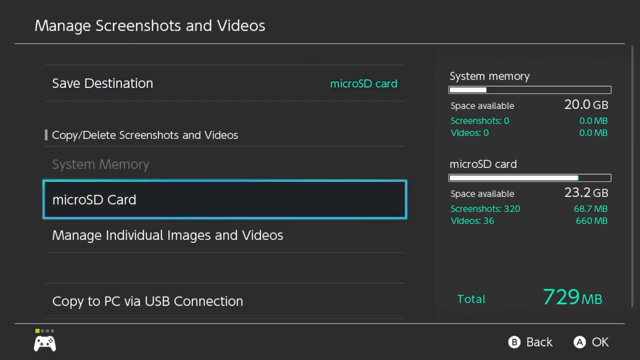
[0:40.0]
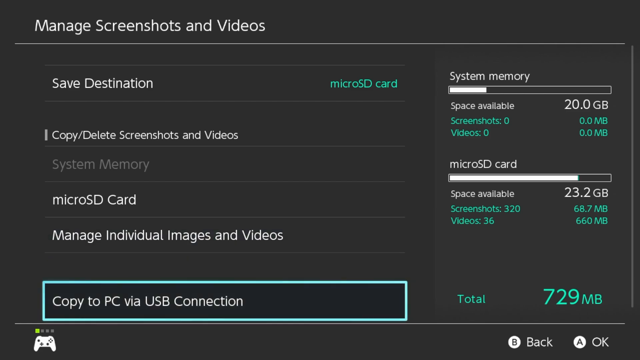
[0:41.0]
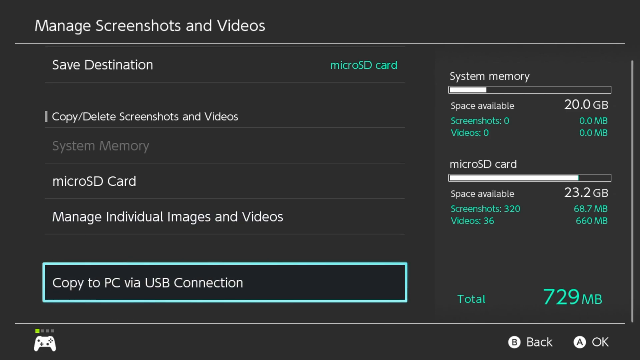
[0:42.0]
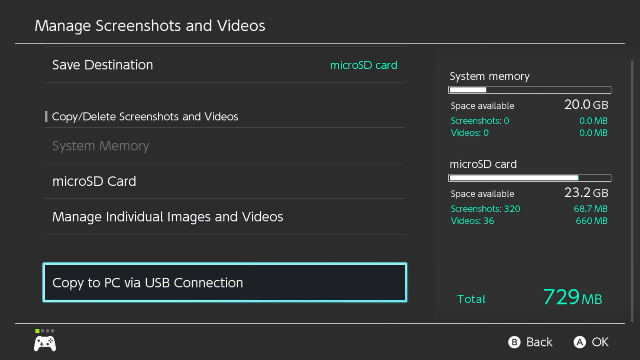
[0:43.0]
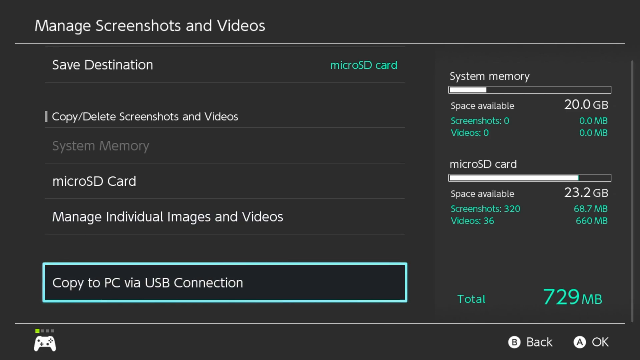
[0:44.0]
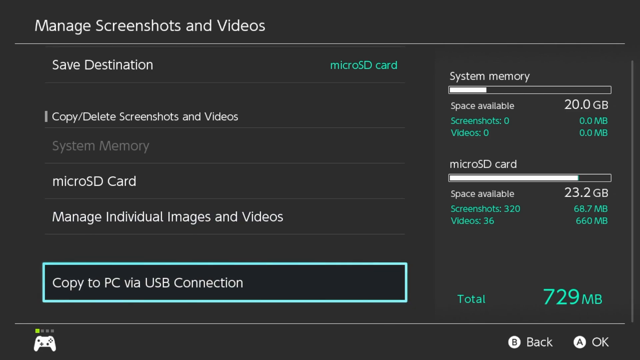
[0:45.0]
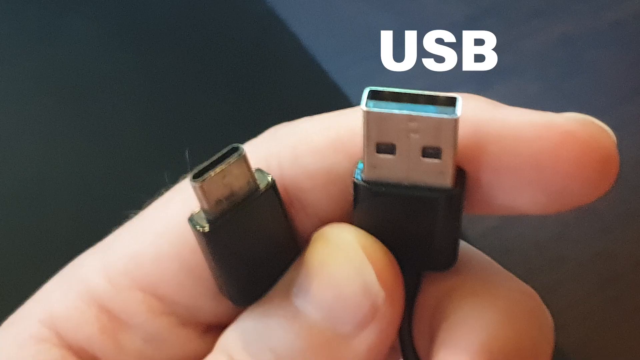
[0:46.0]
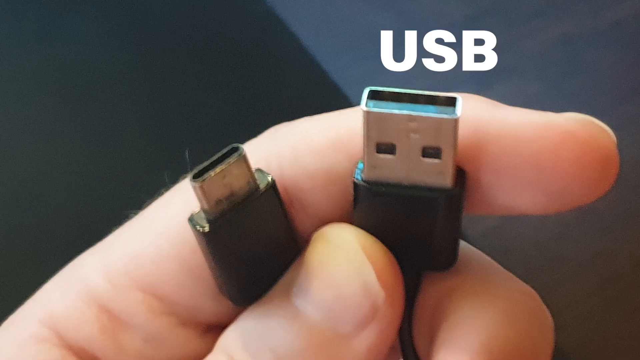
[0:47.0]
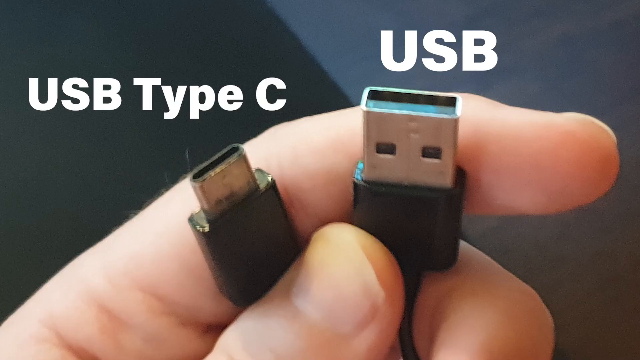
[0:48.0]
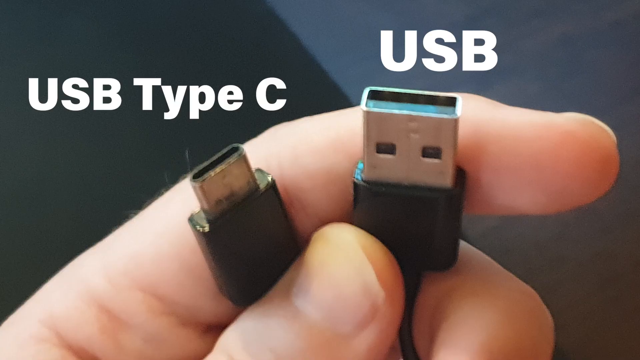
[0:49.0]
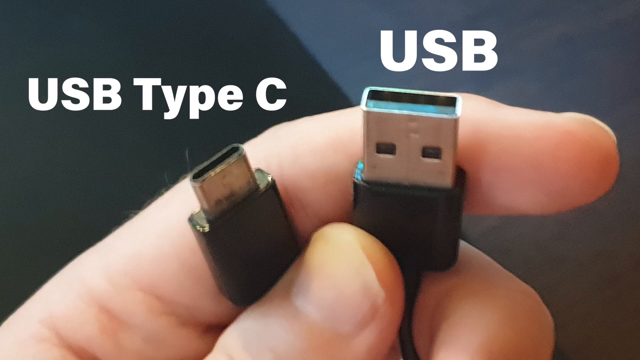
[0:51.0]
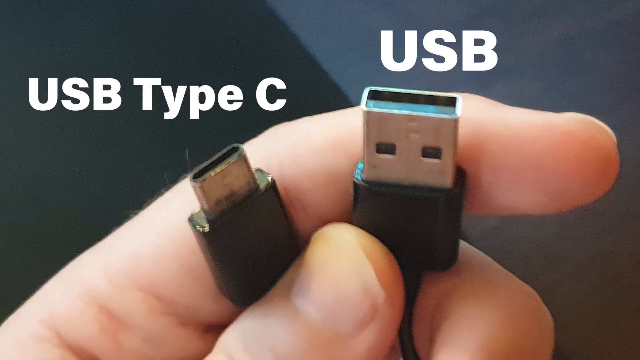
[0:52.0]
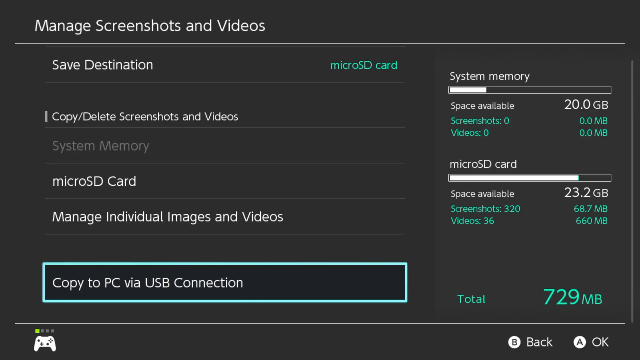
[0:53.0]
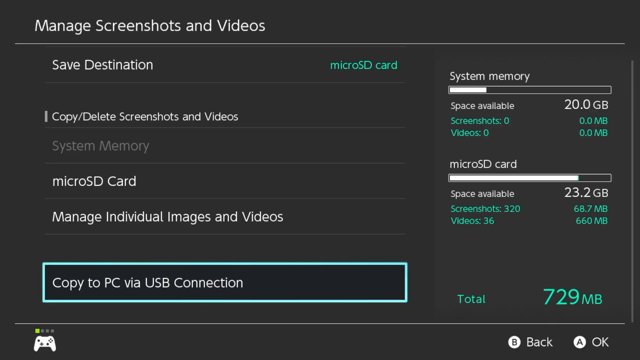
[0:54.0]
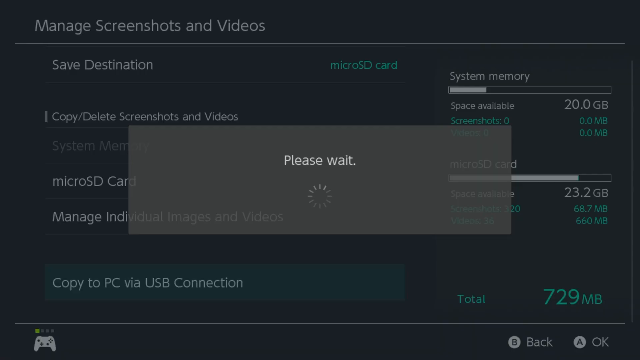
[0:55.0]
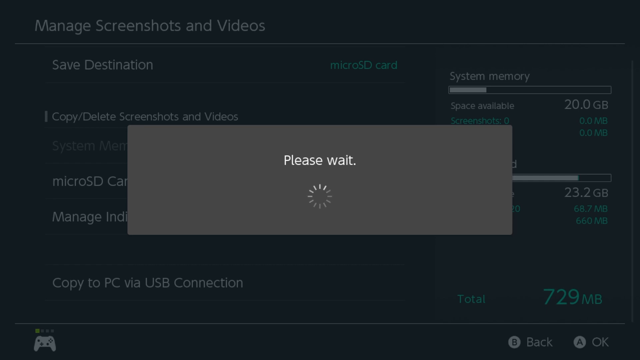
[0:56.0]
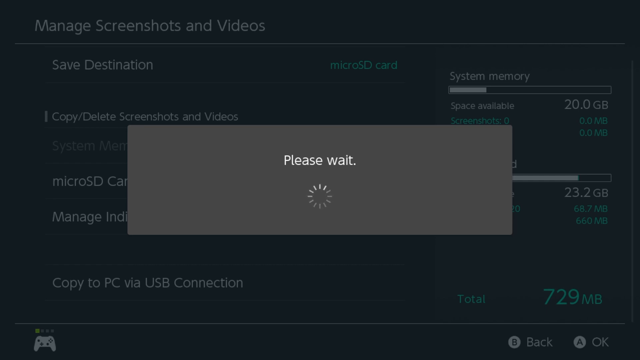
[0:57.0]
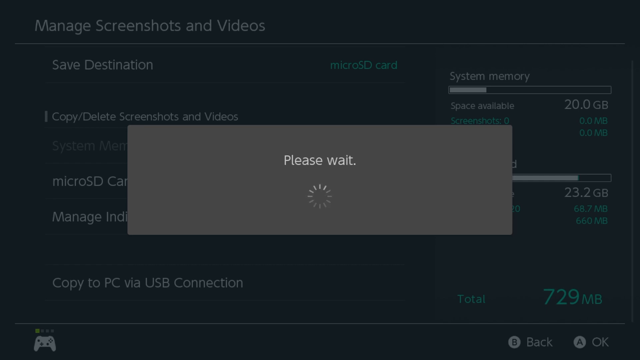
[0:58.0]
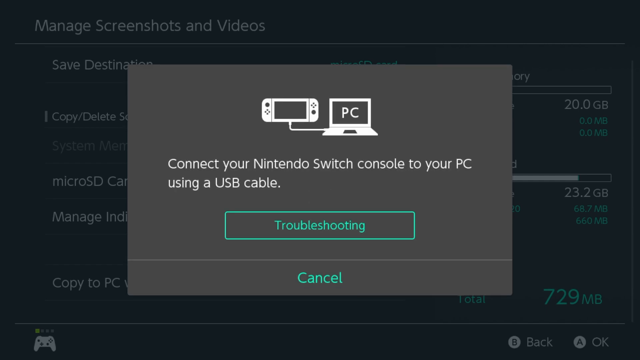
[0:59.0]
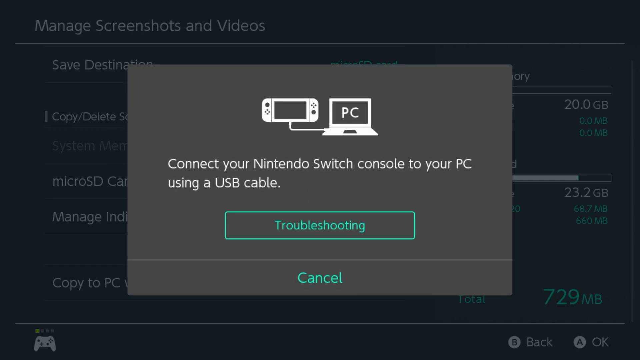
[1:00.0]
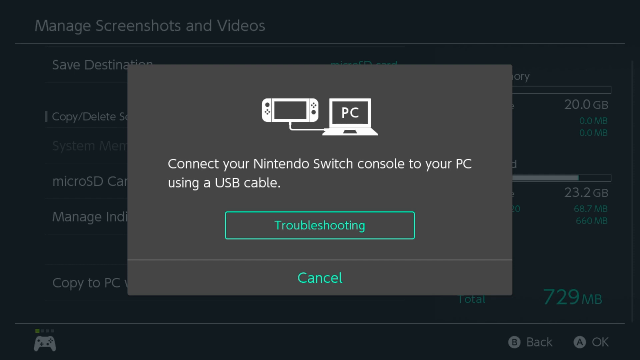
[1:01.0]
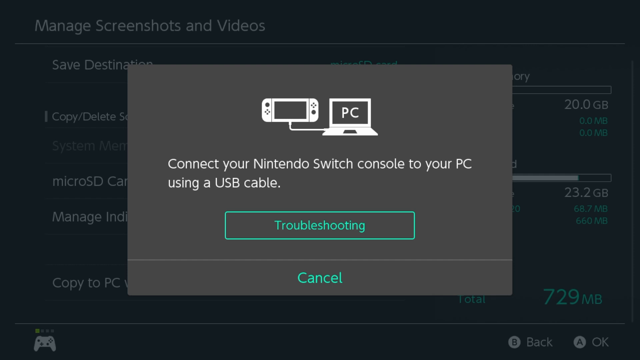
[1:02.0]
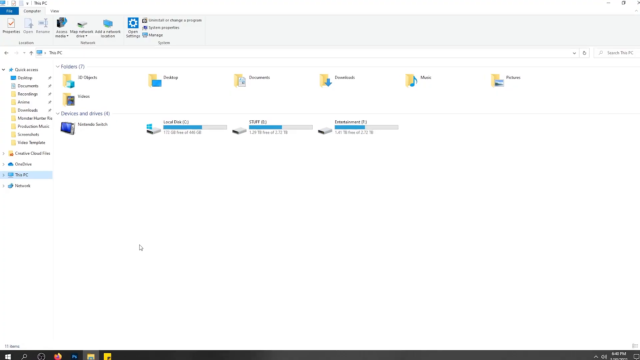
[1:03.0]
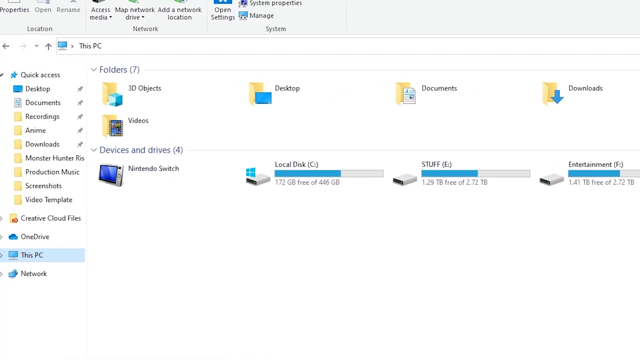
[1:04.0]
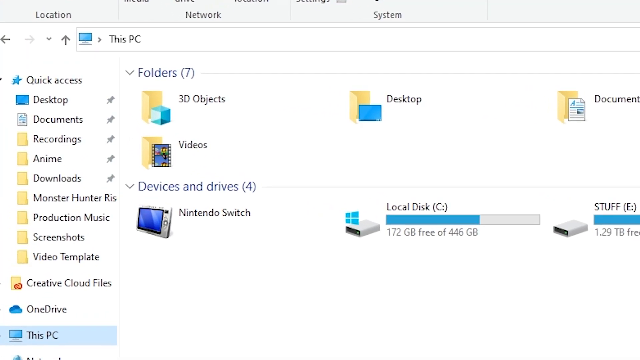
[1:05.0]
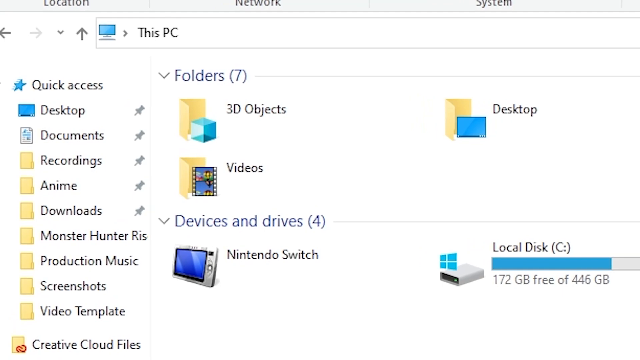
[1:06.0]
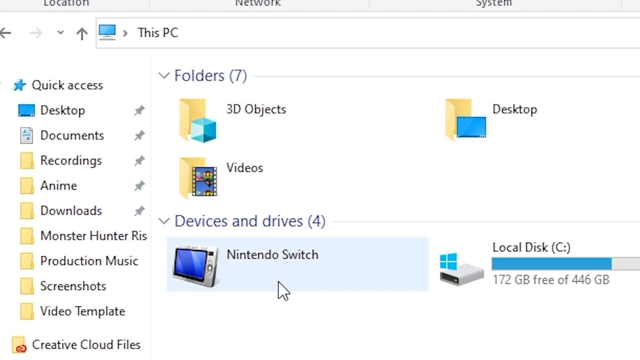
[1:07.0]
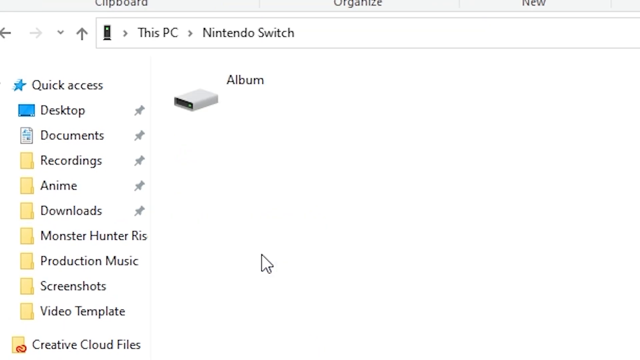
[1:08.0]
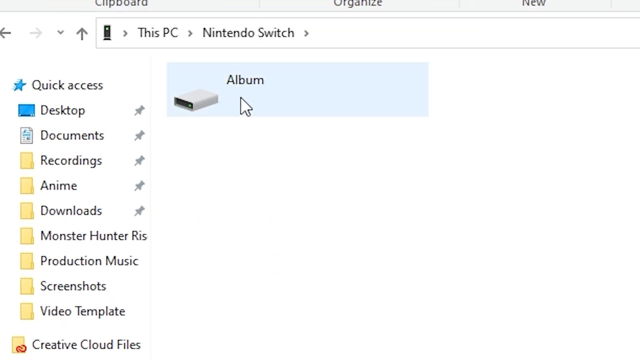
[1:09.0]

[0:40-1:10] The user keeps scrolling through options, reaches copy to PC via USB connection, and hovers over it for a moment. A photo pops up showing a close-up of a hand holding a USB cable, with text reading "USB" on one end, and the other end is USB type-C. The photo disappears and the Switch screen returns. The user clicks copy to PC via USB connection and "please wait" pops up. An instruction from the Switch reads "connect your Nintendo Switch console to your PC using a USB cable", with a troubleshooting button and, under it, cancel. The scene moves to a Windows PC showing the main folder where the Nintendo Switch is connected, along with other drives such as the local disk, a stuff drive and an entertainment drive. The view zooms in to show that the Nintendo Switch is connected, and the mouse hovers over it as the user goes into it. The Nintendo Switch folder opens another folder containing album; the user clicks album and a couple of different game folders appear.